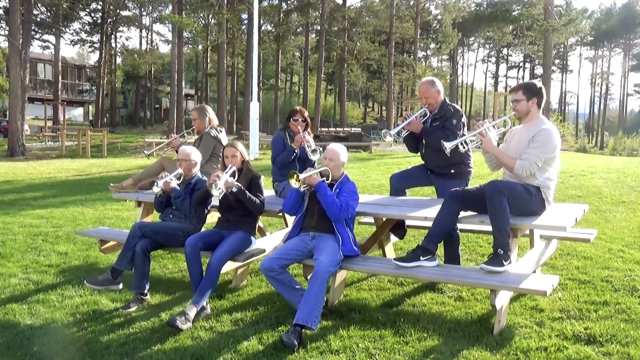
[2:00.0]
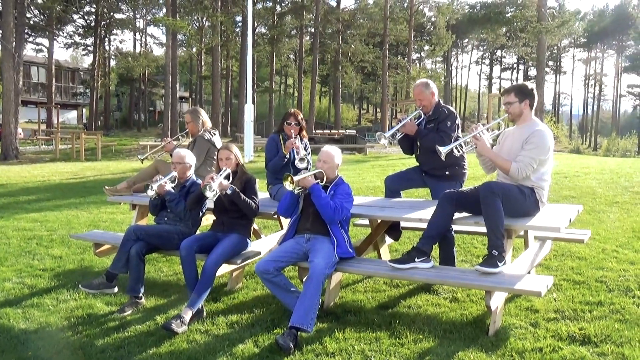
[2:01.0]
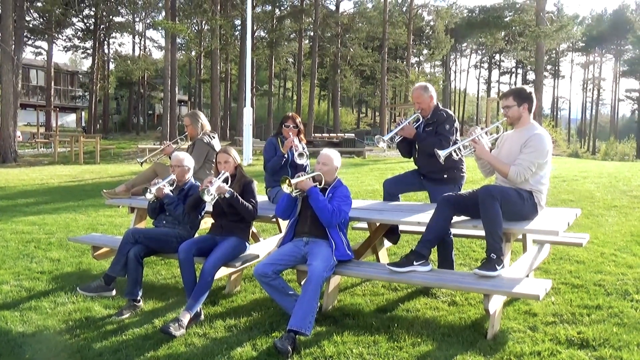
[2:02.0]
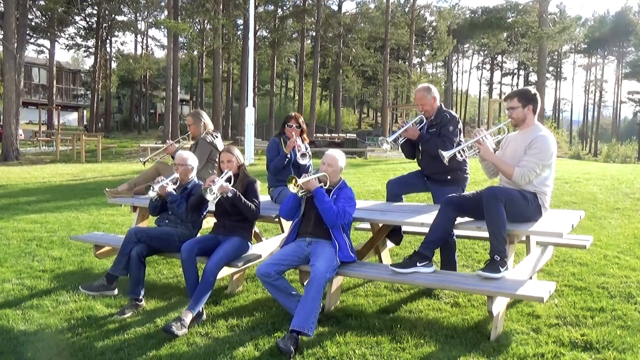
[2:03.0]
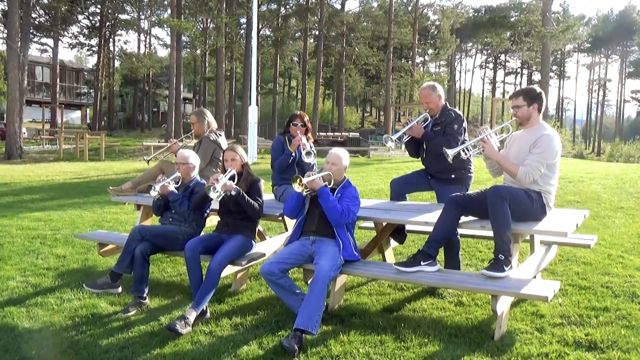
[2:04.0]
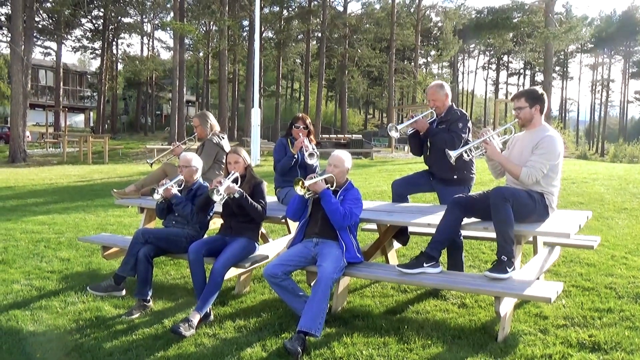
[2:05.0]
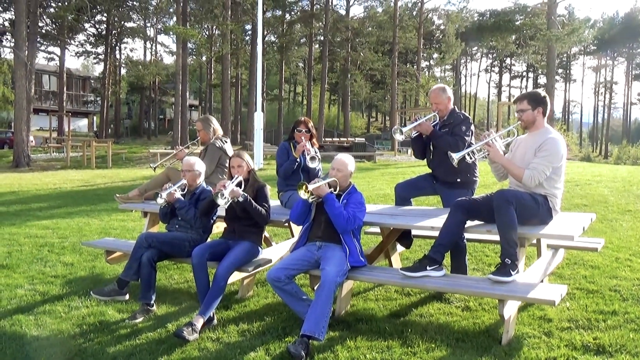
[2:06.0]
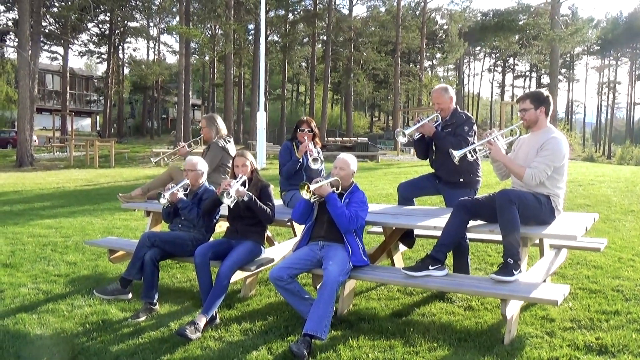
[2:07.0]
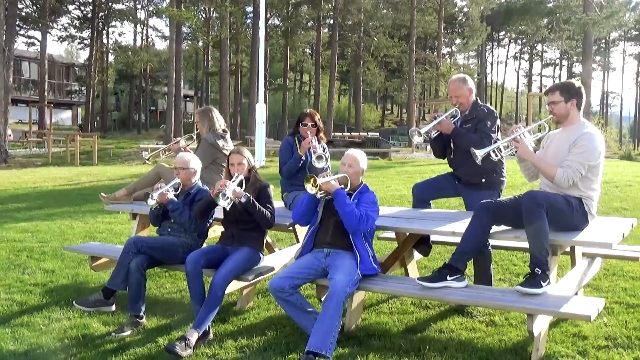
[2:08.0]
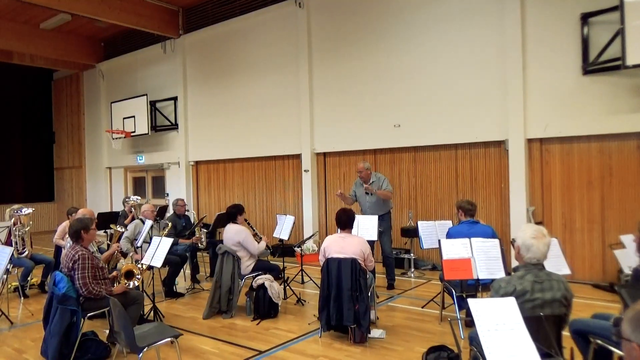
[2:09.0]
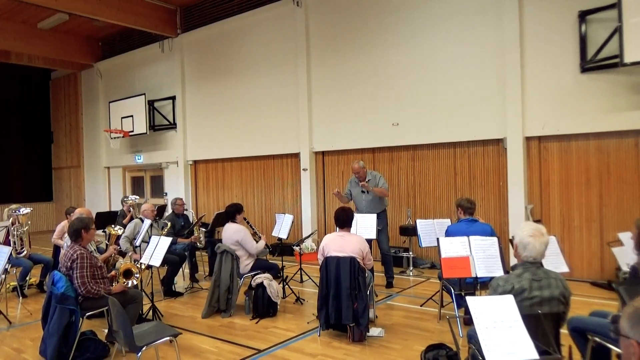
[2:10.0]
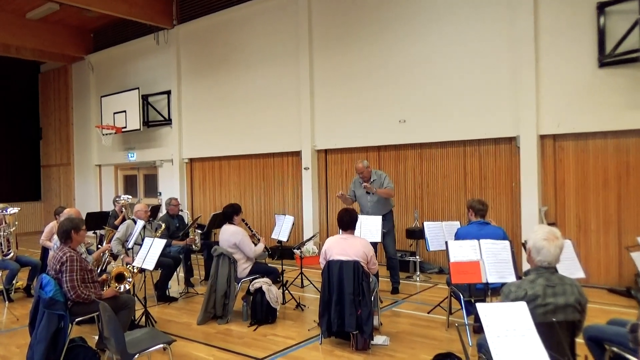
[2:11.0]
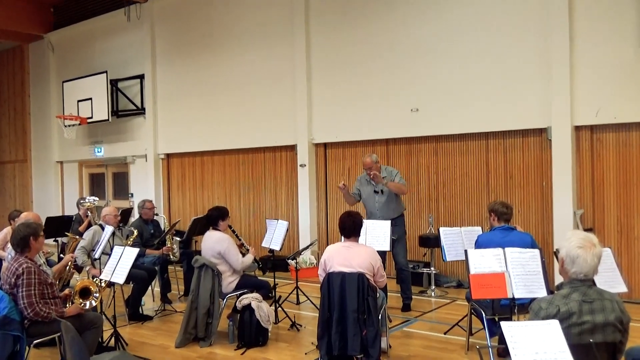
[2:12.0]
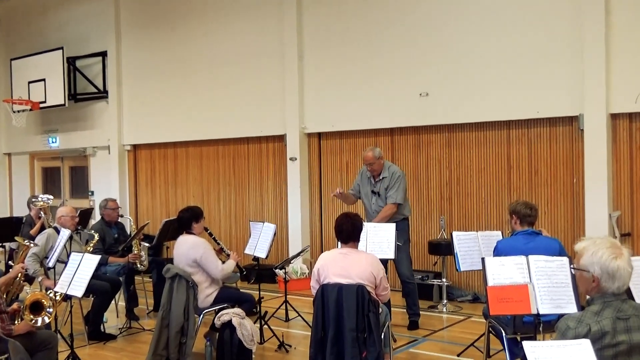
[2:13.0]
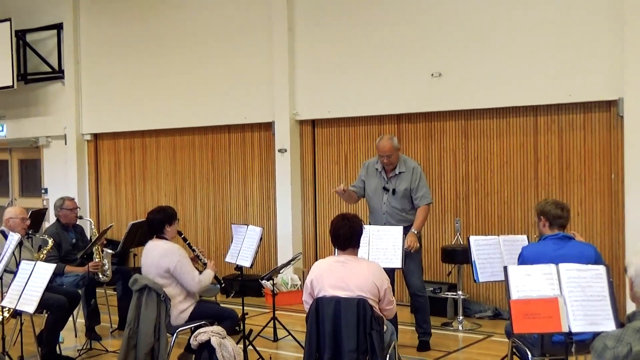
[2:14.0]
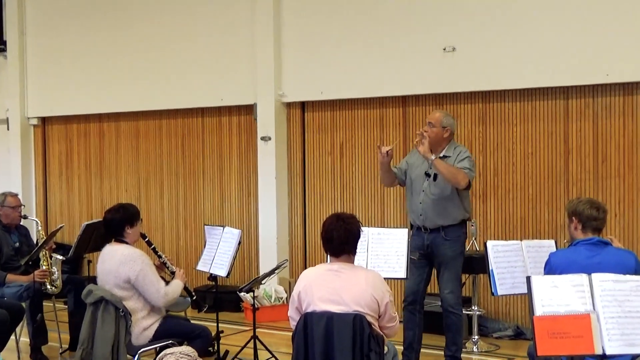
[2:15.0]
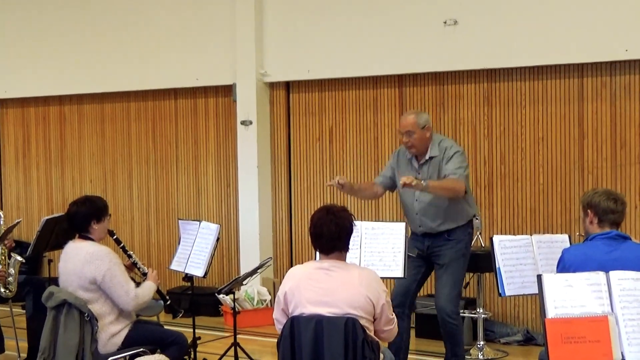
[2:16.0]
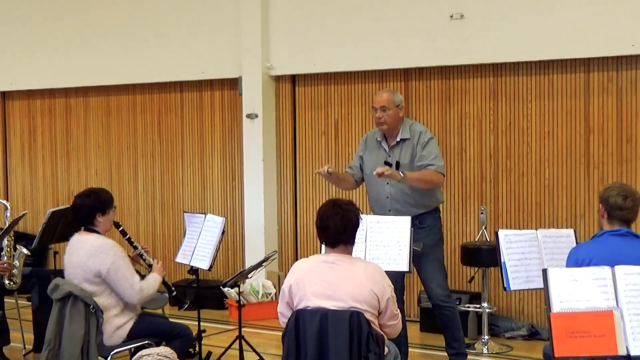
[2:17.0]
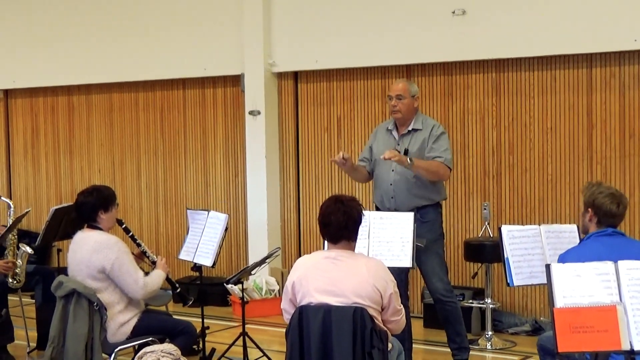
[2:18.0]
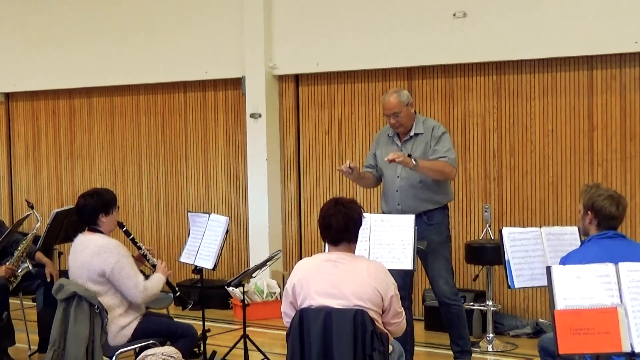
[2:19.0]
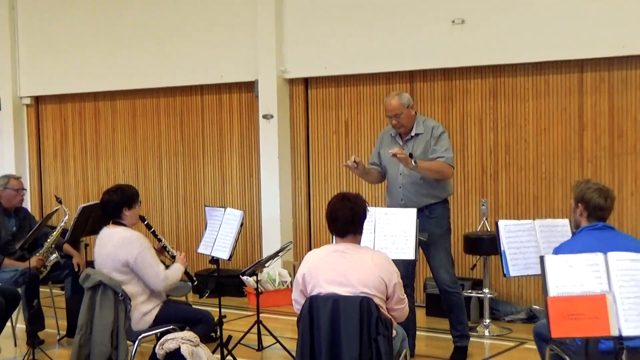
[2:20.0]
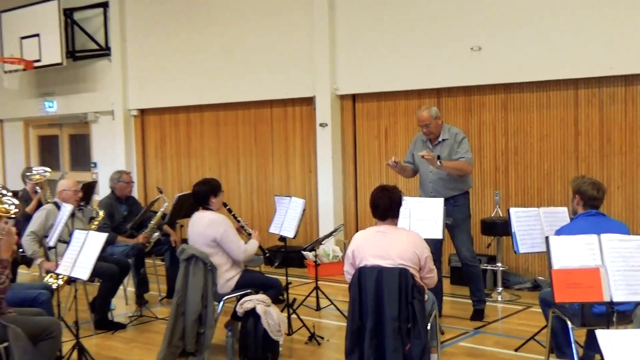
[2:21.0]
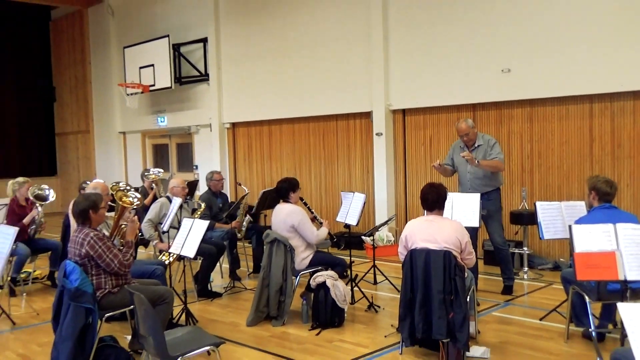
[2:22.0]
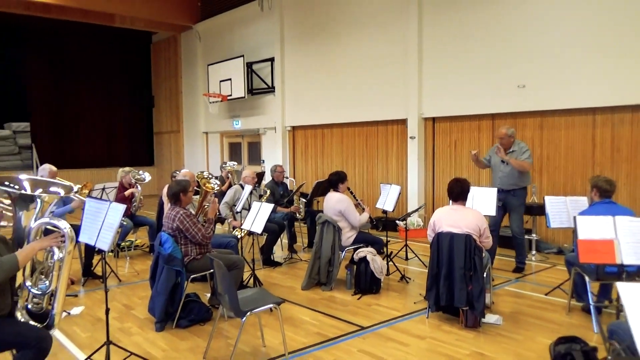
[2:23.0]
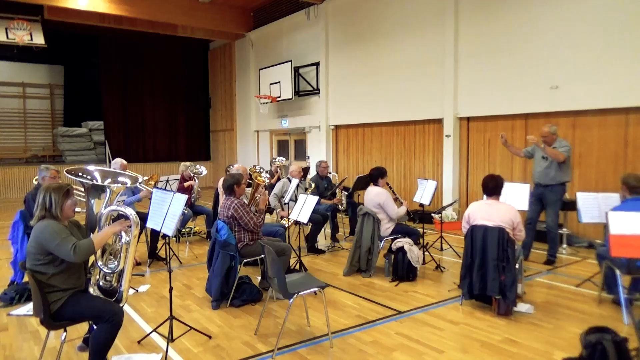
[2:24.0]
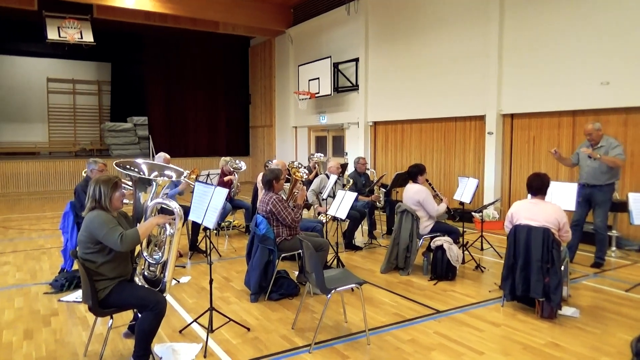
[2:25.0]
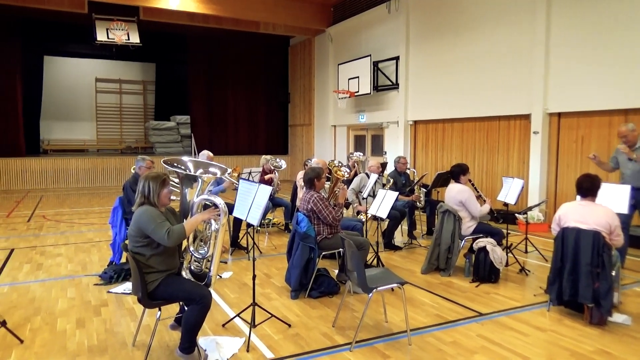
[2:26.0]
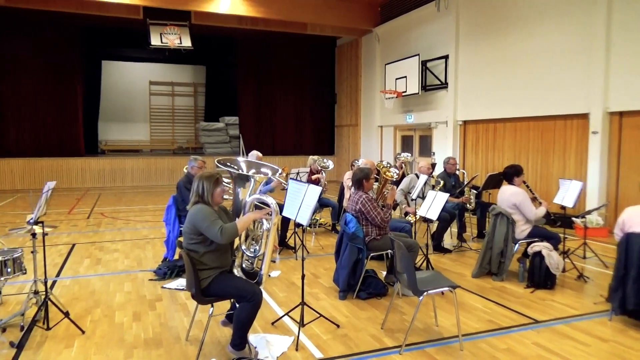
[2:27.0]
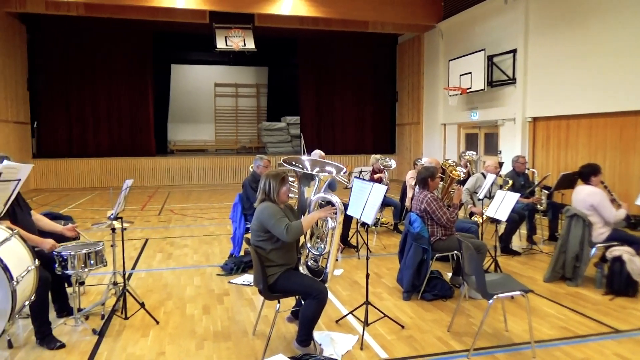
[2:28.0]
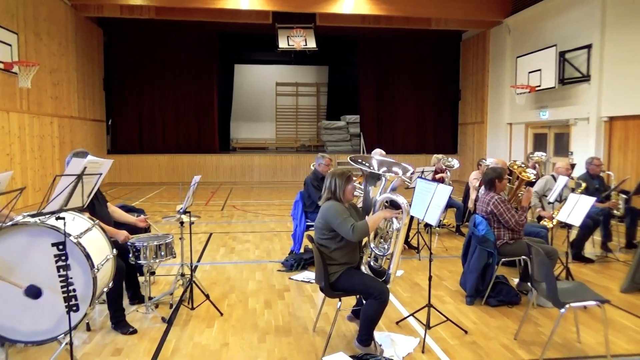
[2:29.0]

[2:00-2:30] A bunch of people sit on a wooden park bench playing brass instruments, all trumpets. They all wear long pants and are in a large green grassy field with large pine trees in the background. The video cuts to a shot from behind a bunch of people in an orchestra sitting in chairs in a basketball court, all facing a conductor who waves his hands around, conducting. The walls of the basketball court room are brown wood panels. The video zooms out slightly and pans to the left to show more people playing larger instruments, then keeps moving left to show the percussion group playing their drums. All of the musicians have sheet music on stands in front of them.